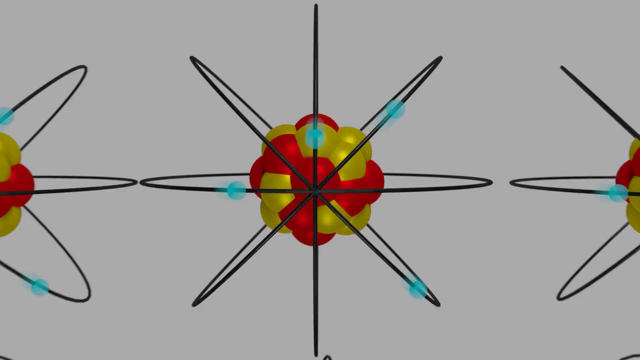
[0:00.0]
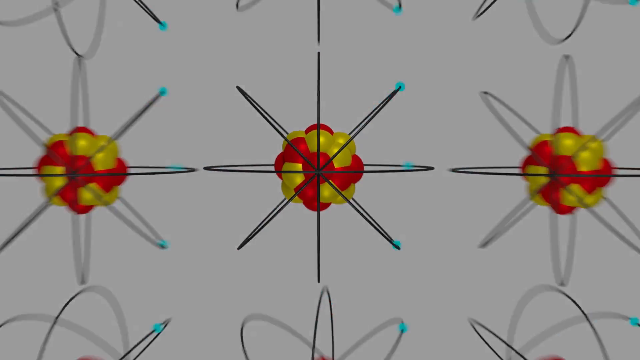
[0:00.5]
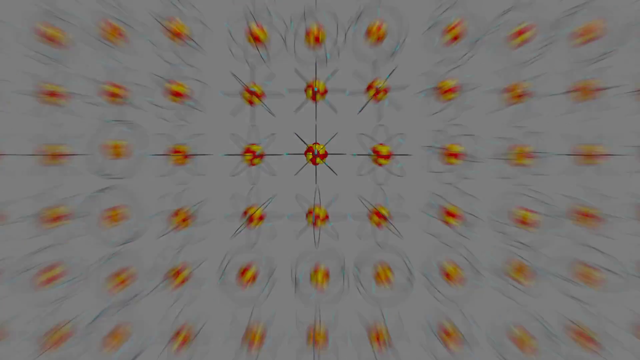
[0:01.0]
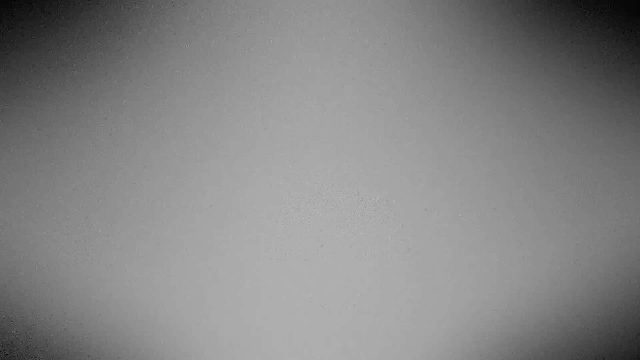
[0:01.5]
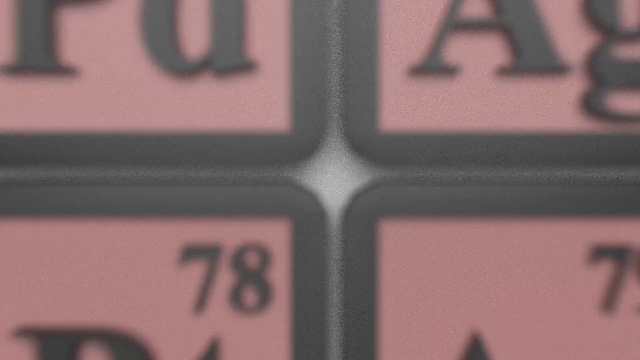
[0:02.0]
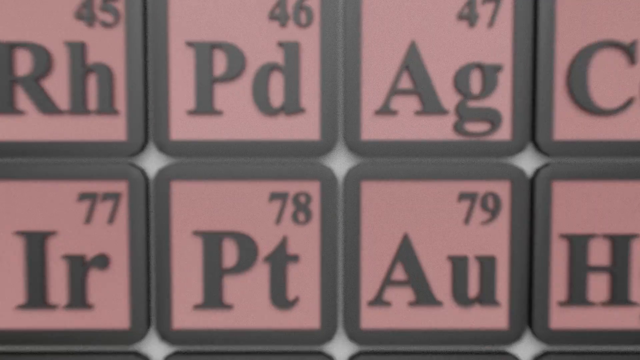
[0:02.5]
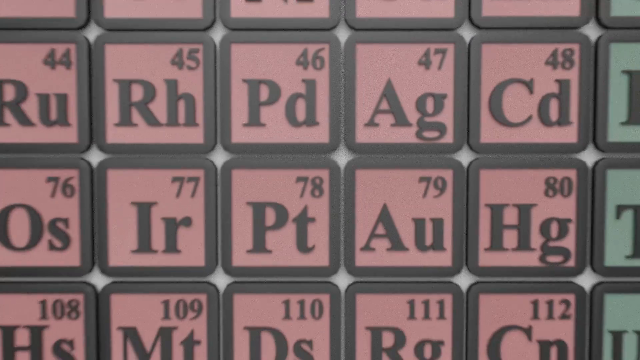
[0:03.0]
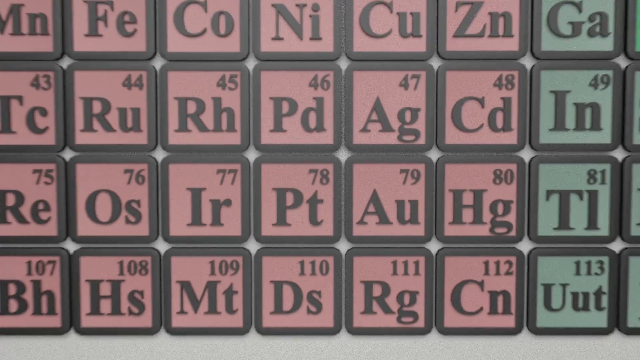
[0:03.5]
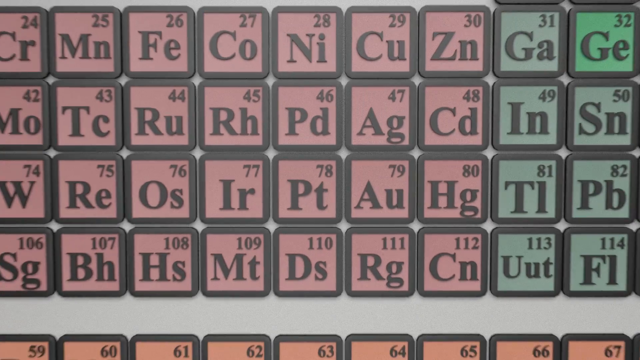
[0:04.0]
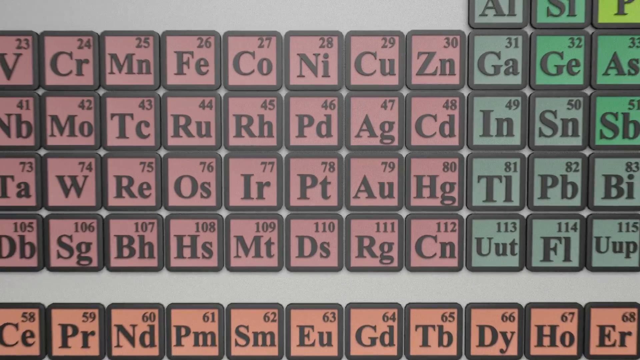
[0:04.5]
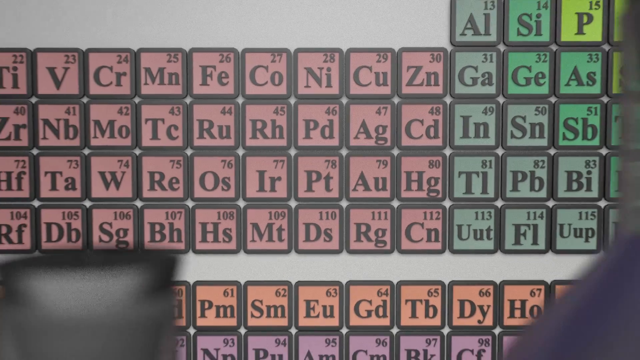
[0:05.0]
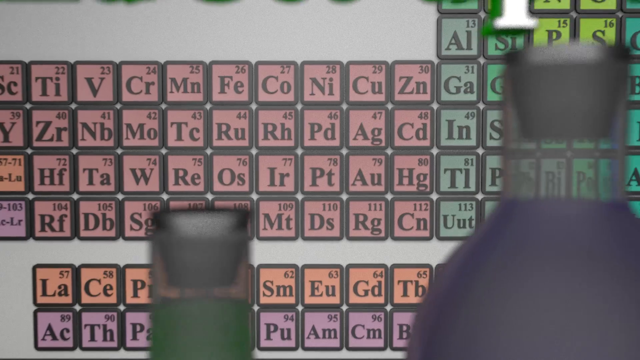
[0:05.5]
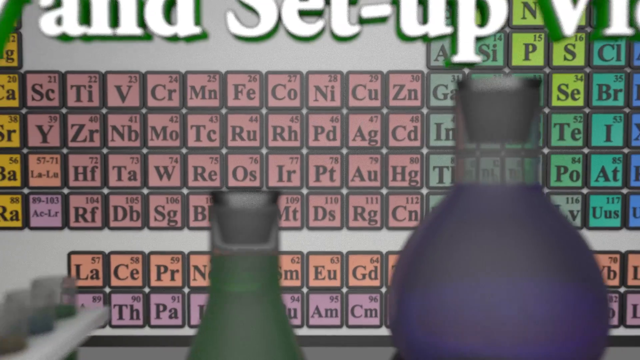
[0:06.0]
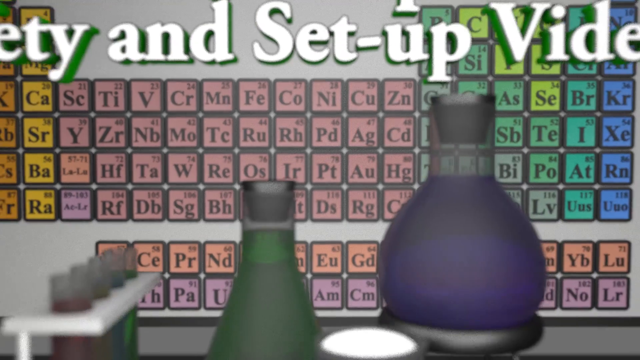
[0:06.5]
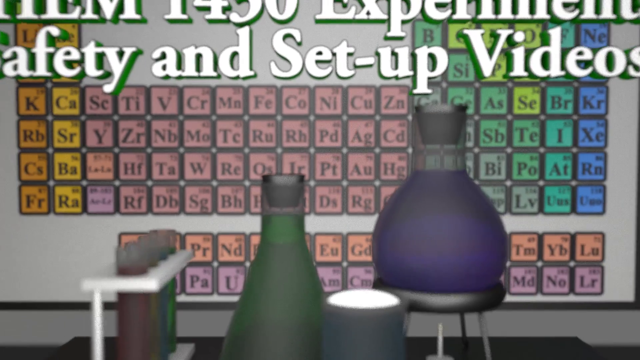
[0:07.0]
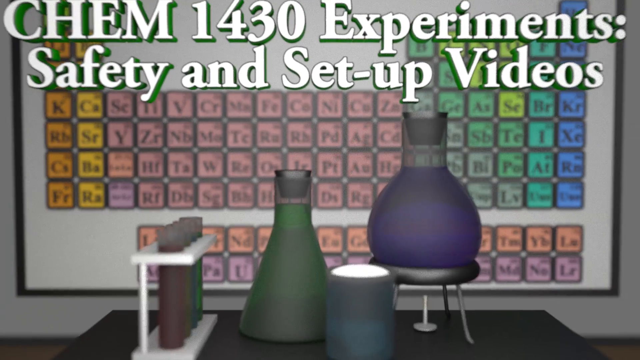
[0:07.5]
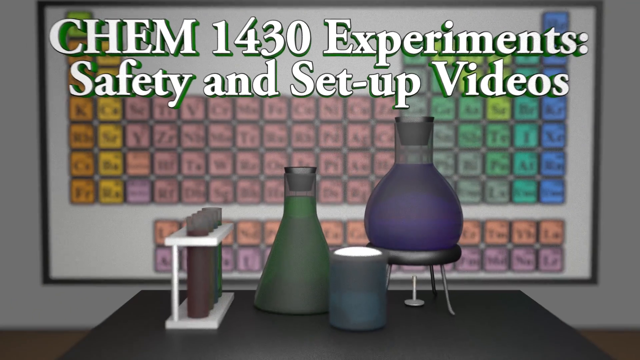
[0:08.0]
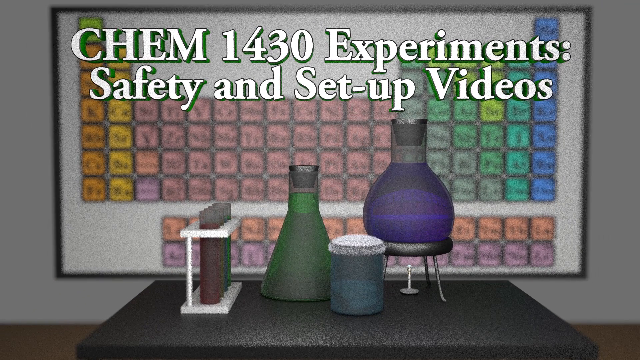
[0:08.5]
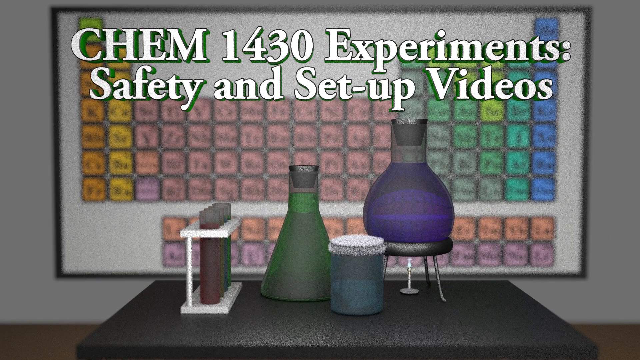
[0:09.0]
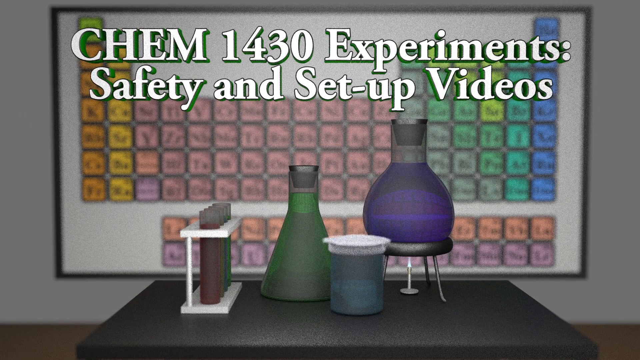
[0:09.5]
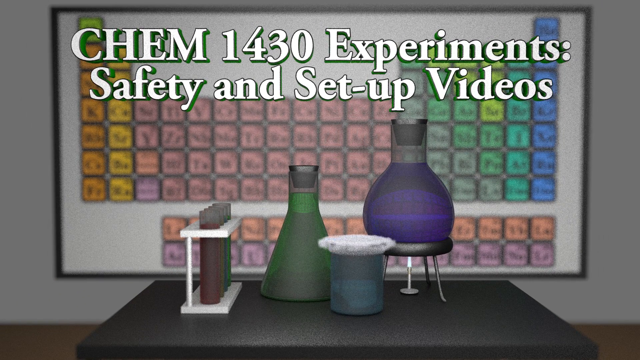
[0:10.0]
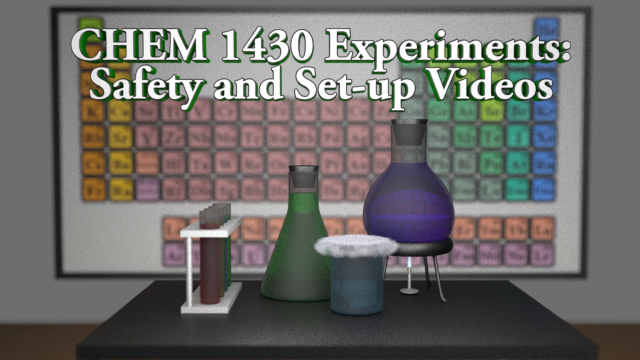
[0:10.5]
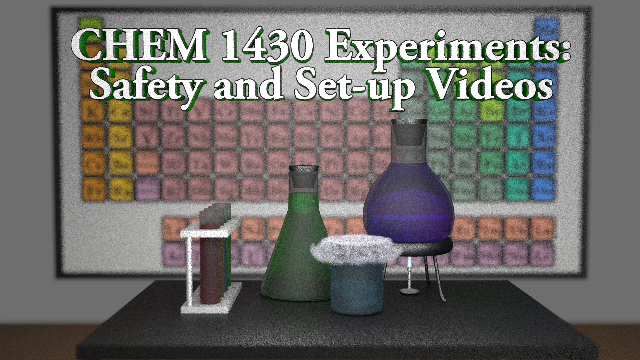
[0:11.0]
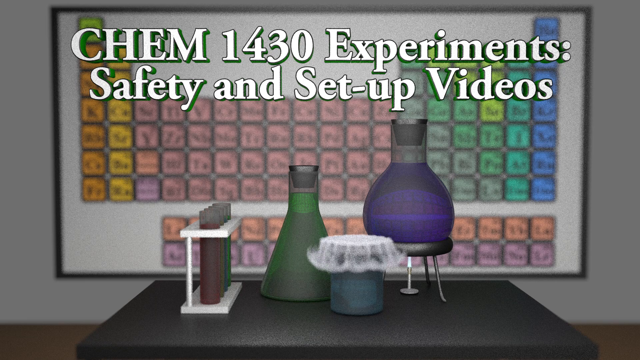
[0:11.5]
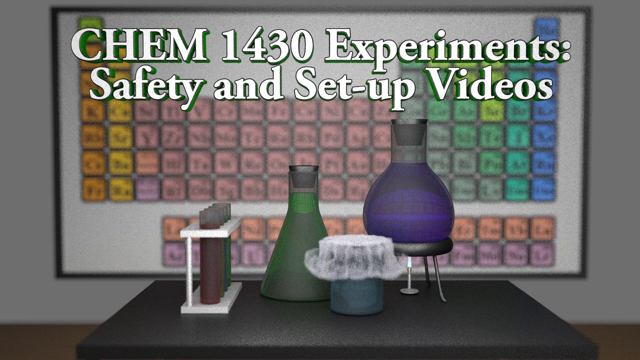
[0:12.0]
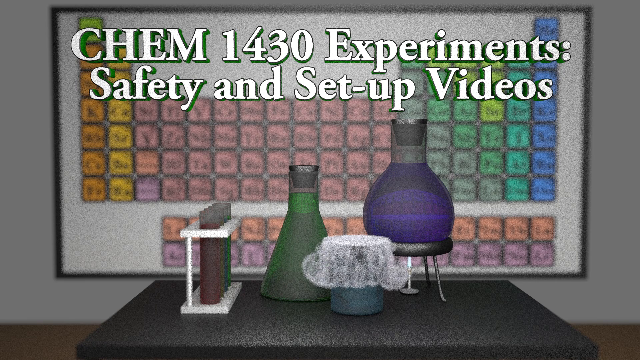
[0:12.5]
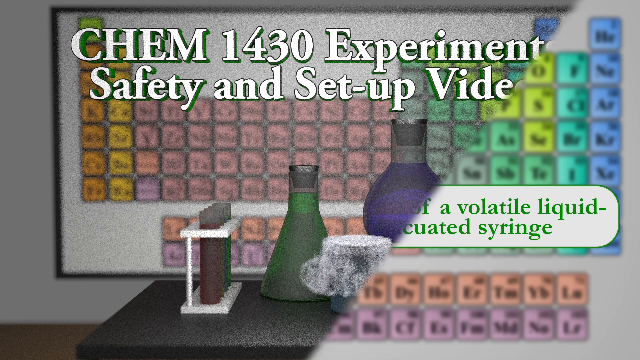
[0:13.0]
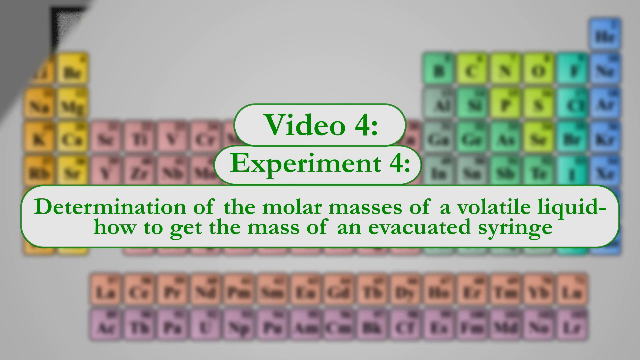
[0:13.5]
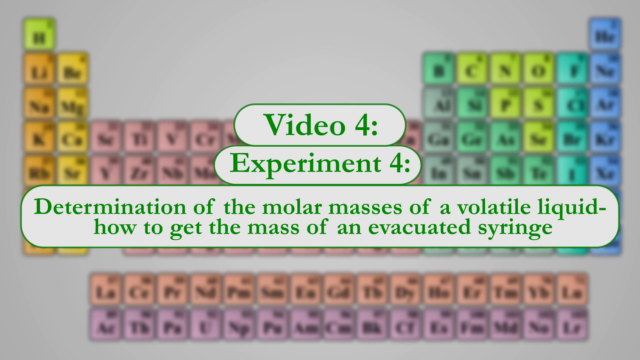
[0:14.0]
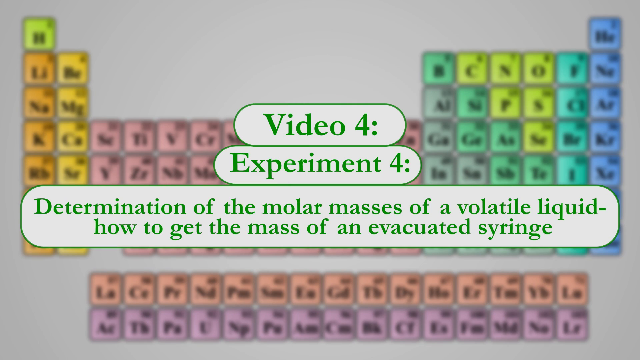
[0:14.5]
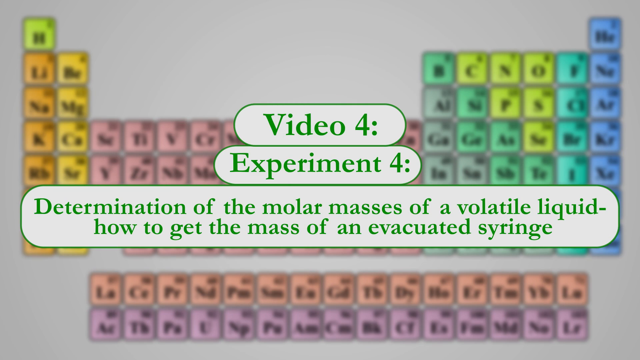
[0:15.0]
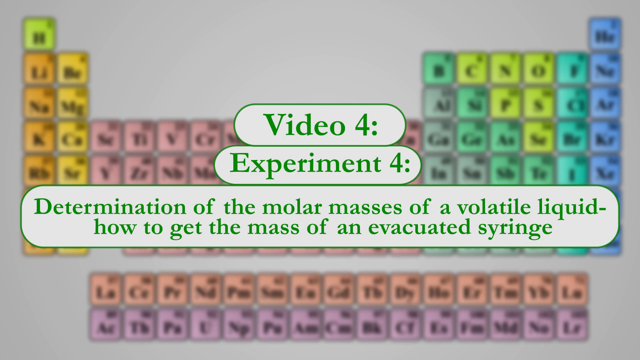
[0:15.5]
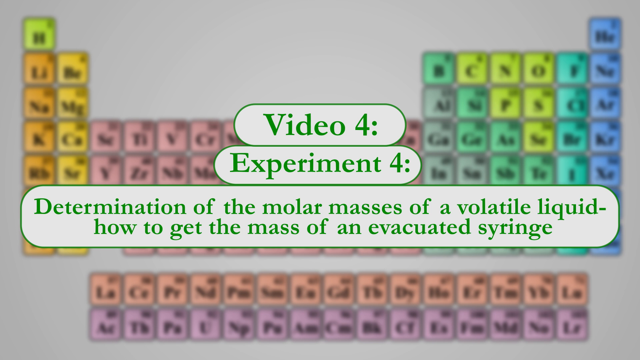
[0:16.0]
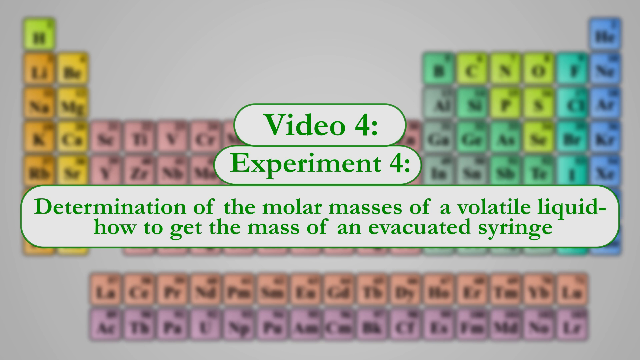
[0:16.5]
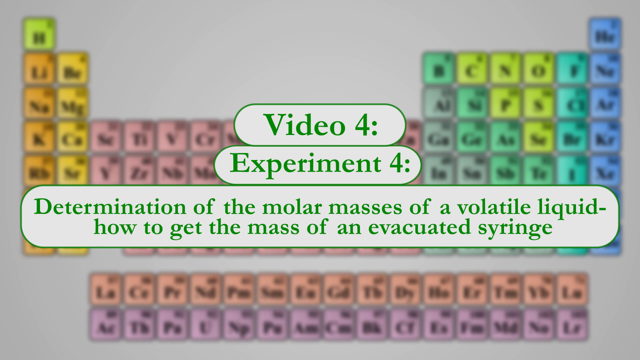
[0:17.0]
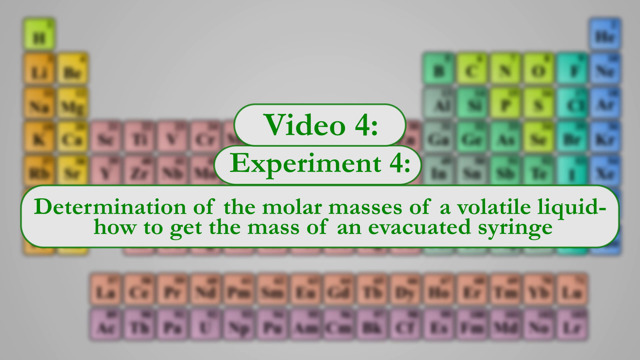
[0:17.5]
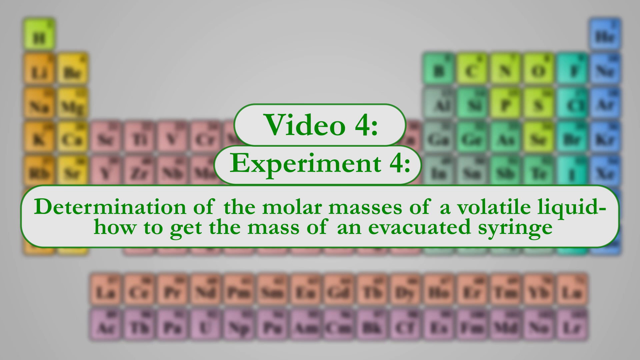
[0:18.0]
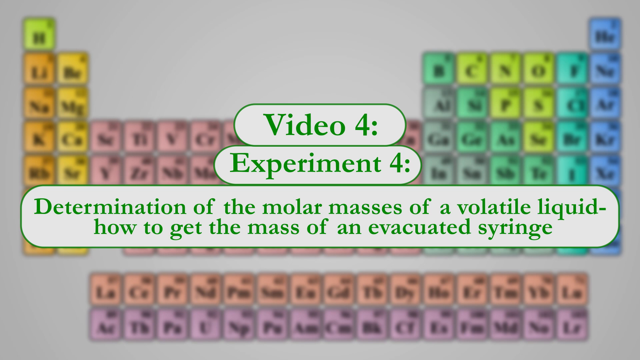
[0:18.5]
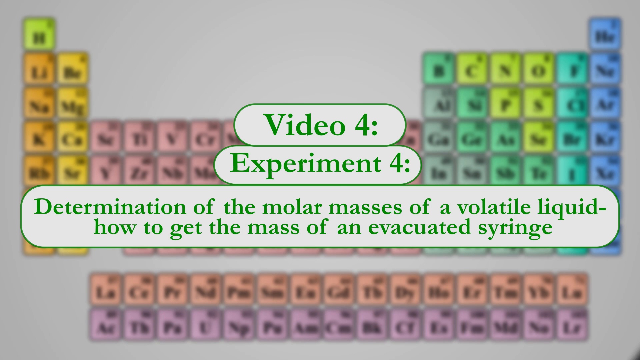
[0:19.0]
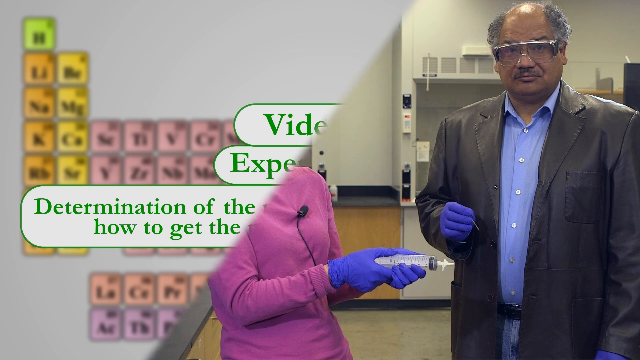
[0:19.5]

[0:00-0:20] The video opens on what looks like a bunch of molecules, then moves to a periodic table, and then to a title that reads "CHEM 1430 Experiments, Safety, and Setup Videos." There is an illustrated image, not a real photograph, of test tubes on a table: the test tube on the right is purple, the one in the middle is green, there are smaller test tubes on the left, and there is what looks like a jar with stuff boiling over. A new slide follows with a periodic table chart in the background. Over the chart, green words in long bubbles read "Video 4, Experiment 4, Determination of the molar masses of a volatile liquid, how to get the mass of an evacuated syringe." The next shot shows a man and a woman, both looking at the camera.